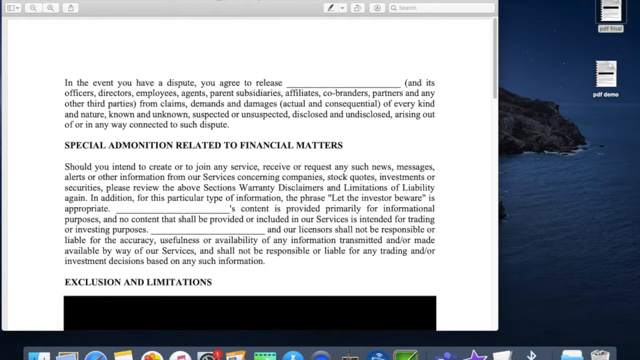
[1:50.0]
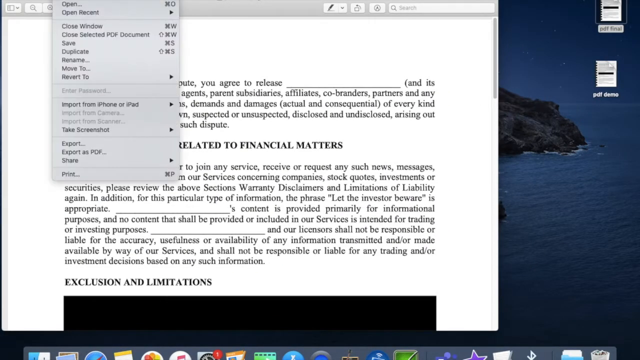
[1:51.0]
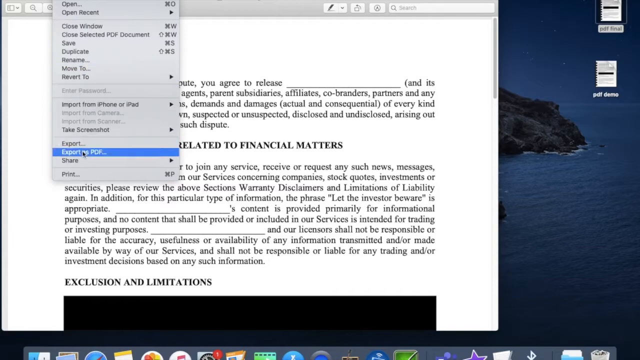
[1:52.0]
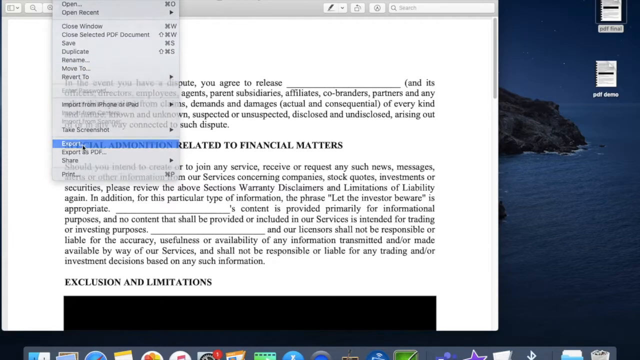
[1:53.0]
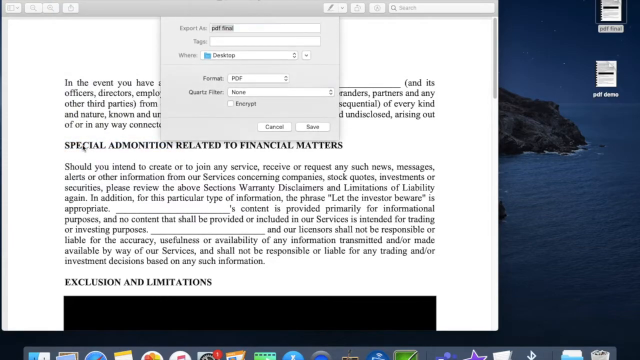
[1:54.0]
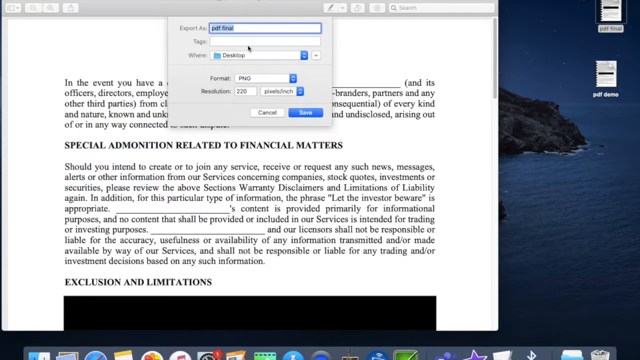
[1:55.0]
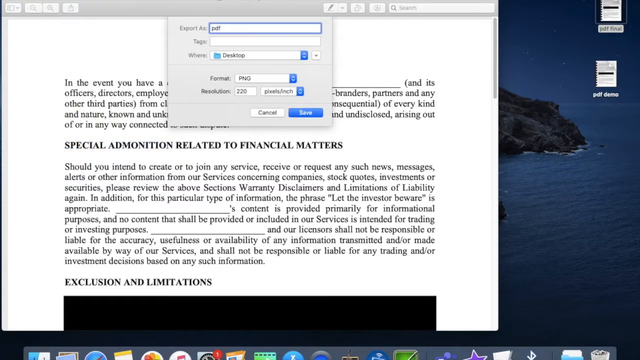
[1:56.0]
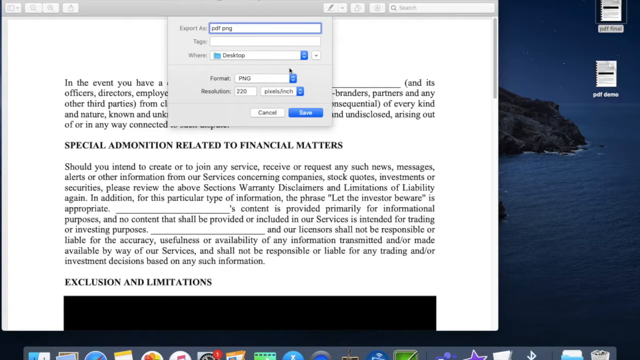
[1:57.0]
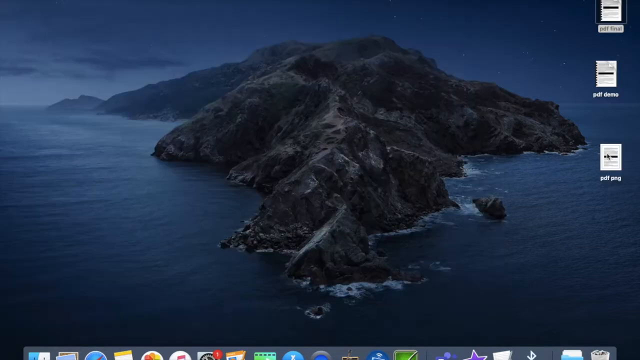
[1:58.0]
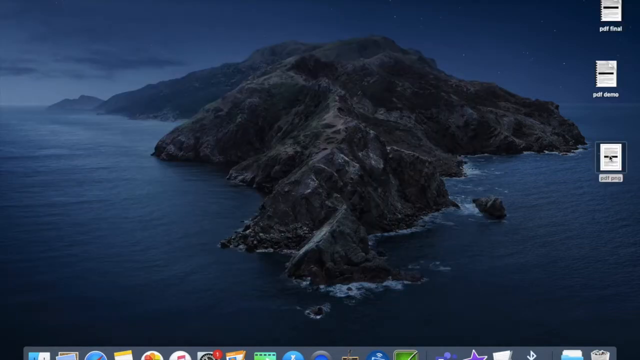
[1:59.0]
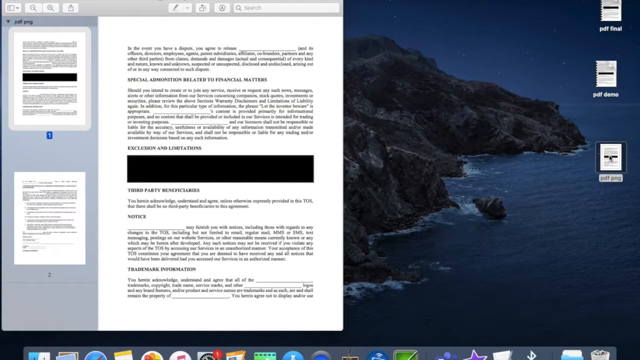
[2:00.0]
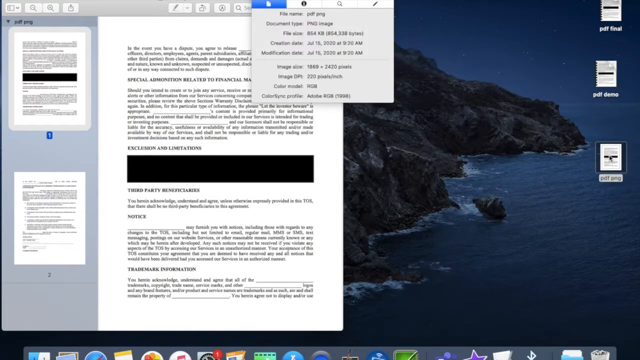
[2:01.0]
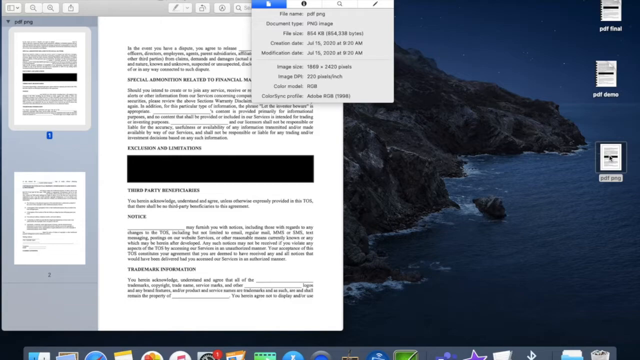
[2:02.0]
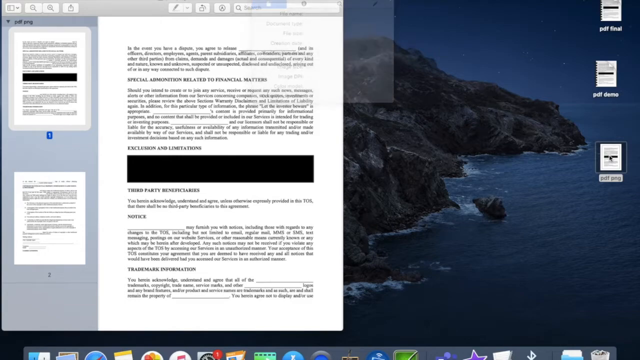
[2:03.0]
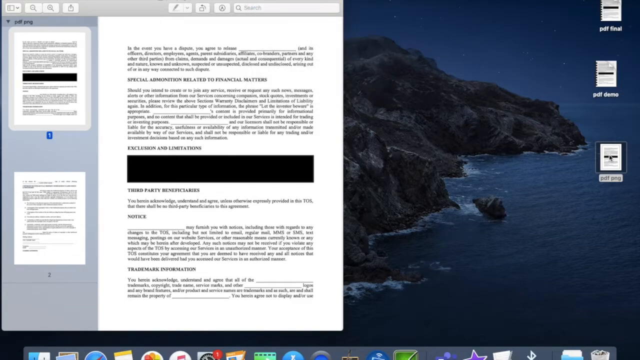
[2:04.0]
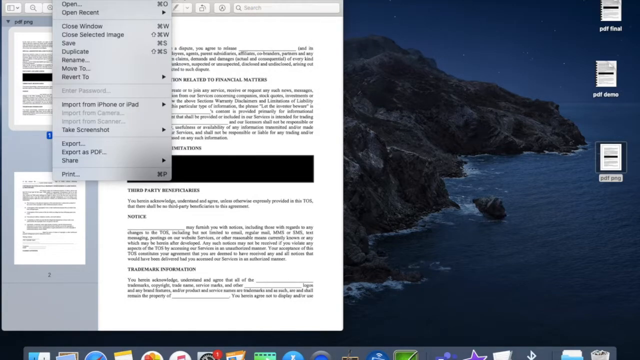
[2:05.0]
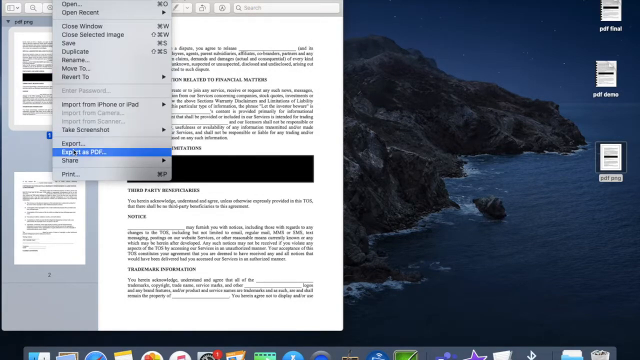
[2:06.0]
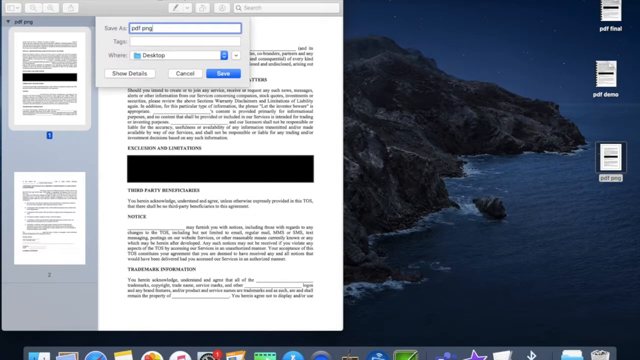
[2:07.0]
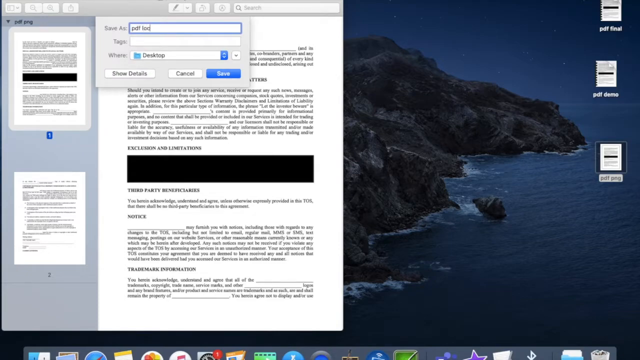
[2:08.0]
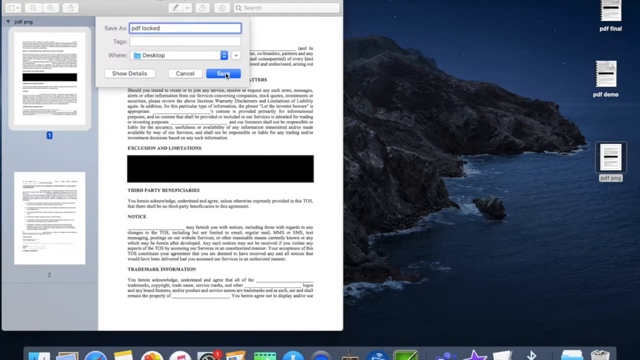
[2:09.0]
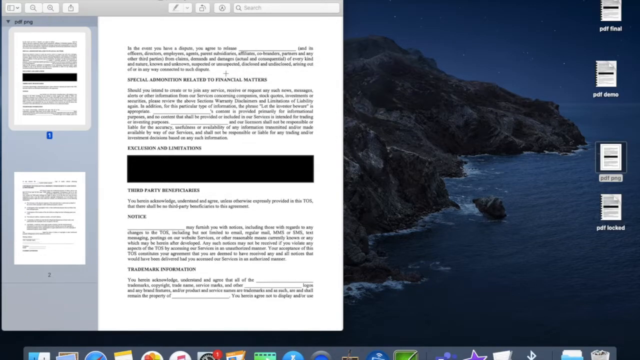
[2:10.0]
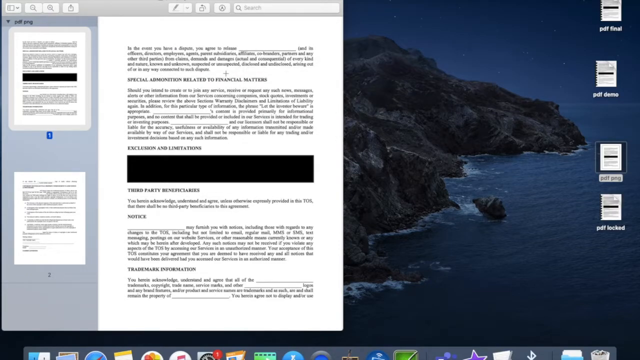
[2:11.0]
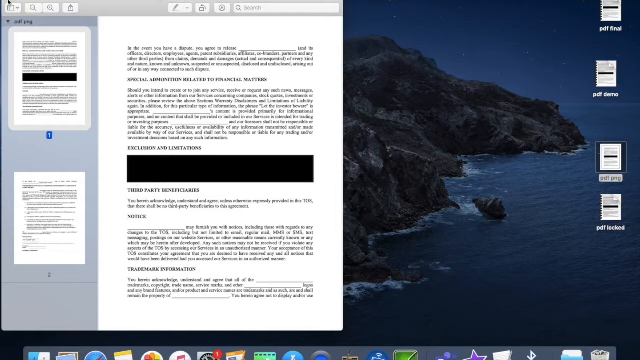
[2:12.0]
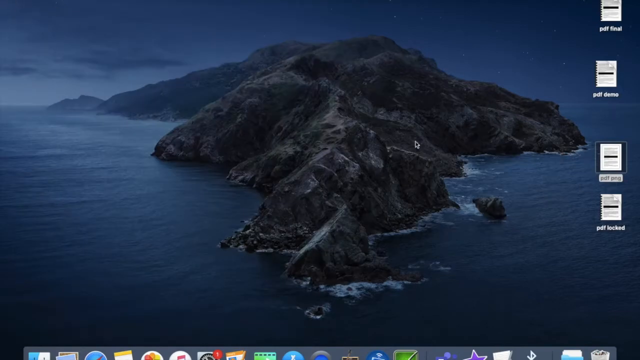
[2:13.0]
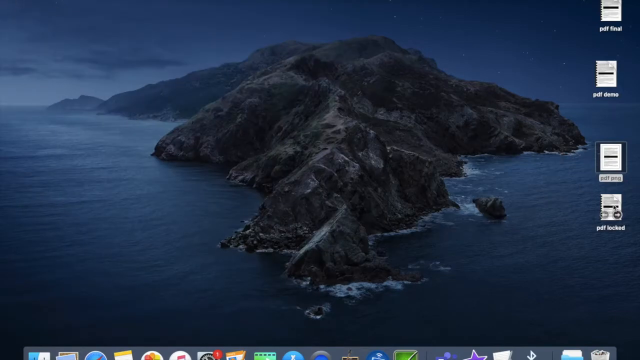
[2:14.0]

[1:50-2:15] A laptop or computer screen shows an open PDF document, a white page with black writing. One title reads "special admonition related to financial matters" with a paragraph underneath, followed by another title reading "exclusion and limitations" with a large black box beneath it. A cursor moves around the icons at the top of the page and clicks one that says "open", bringing up a list of options. It goes down to the "export as PDF" option and clicks it, which brings up a text box whose first field says "export as PDF". The cursor types some text into this field and presses the PDF button. The file disappears, and three small icons that look like Word documents are on the right-hand side of the screen. A large document on the left-hand side of the screen is highlighted with a large black box. The cursor again presses "export as PDF" and changes the title to "PDF locked". Another small icon appears on the right-hand side, making four on that side, and the large document disappears again.